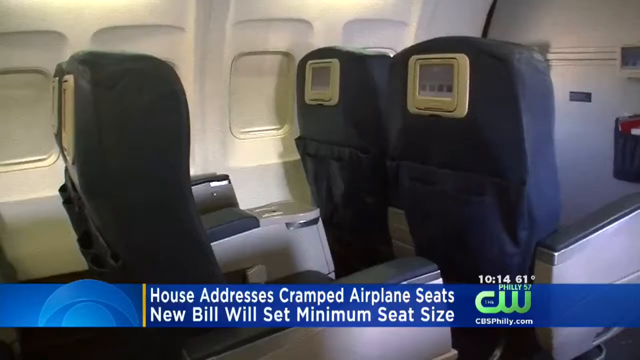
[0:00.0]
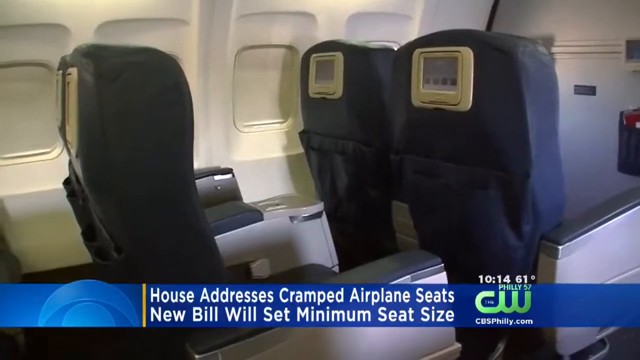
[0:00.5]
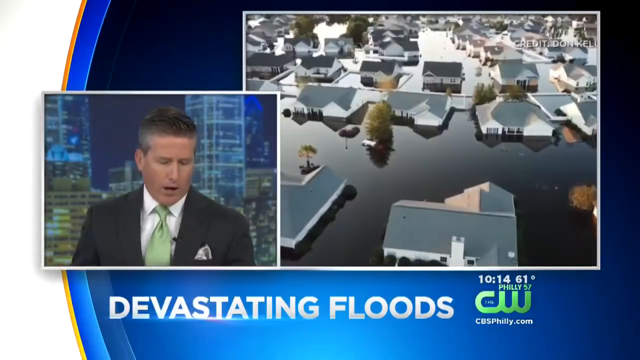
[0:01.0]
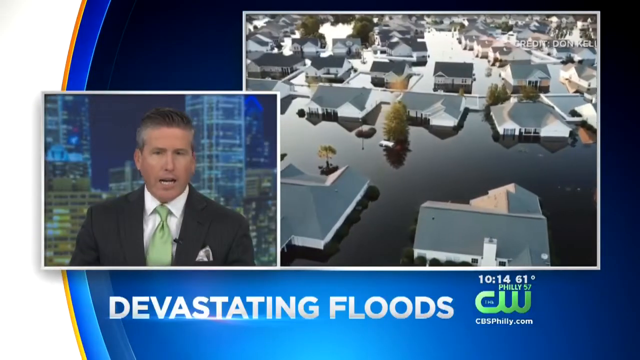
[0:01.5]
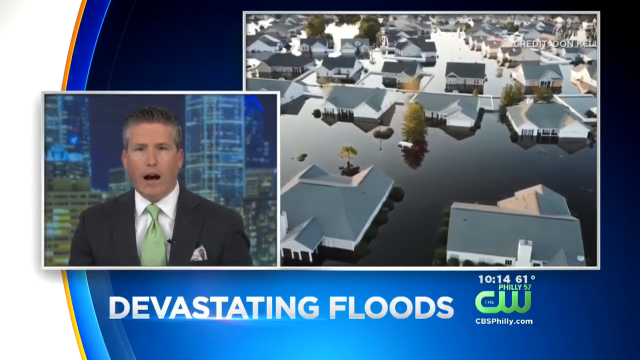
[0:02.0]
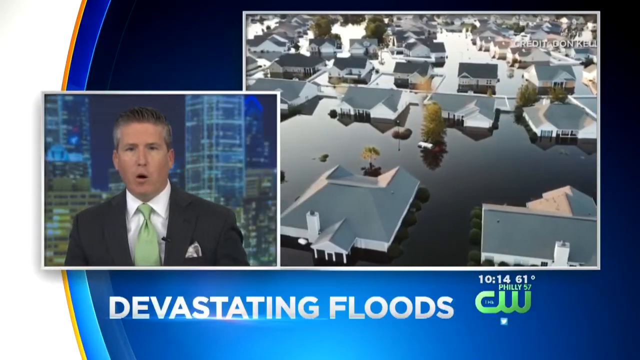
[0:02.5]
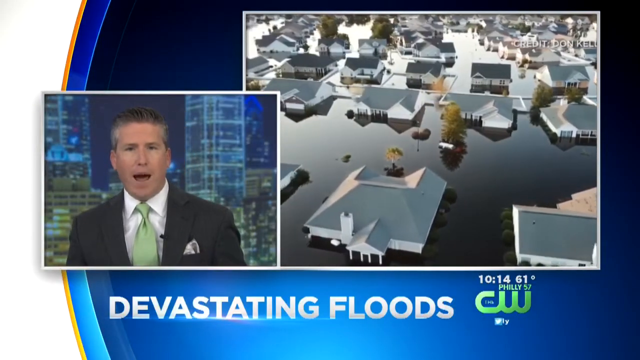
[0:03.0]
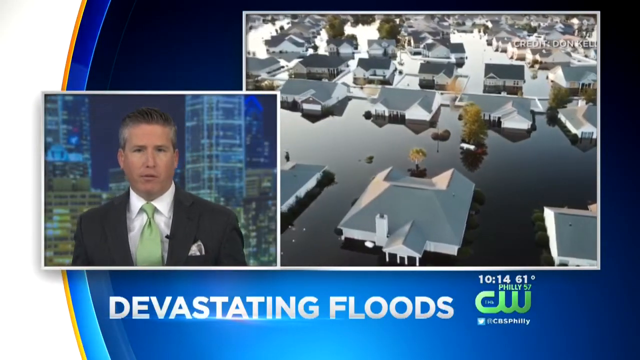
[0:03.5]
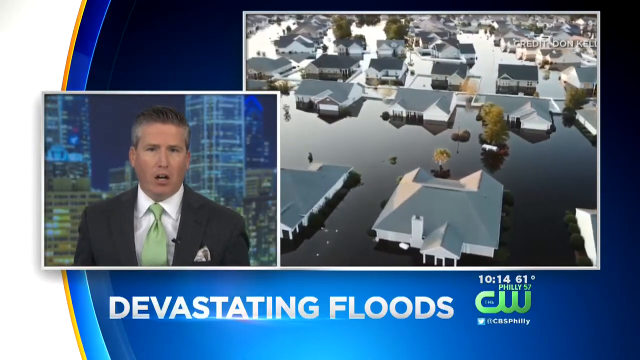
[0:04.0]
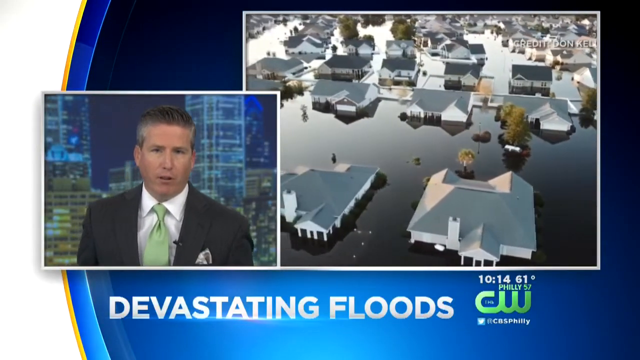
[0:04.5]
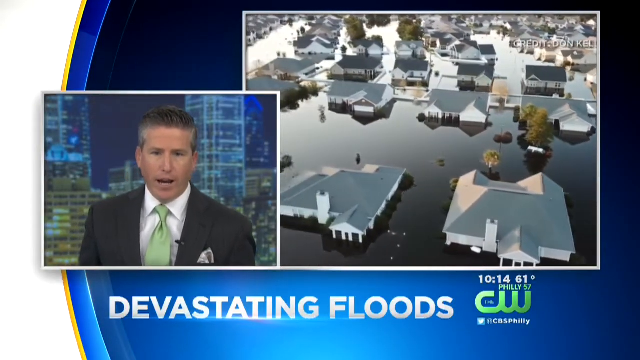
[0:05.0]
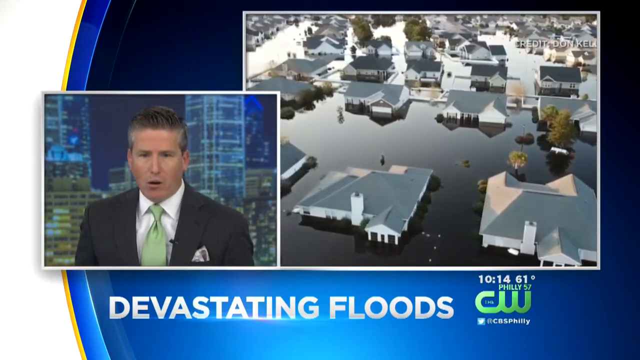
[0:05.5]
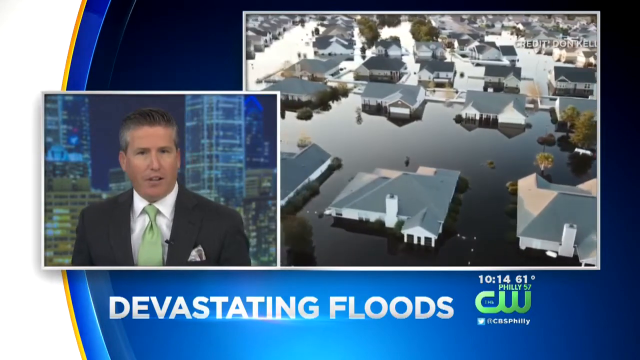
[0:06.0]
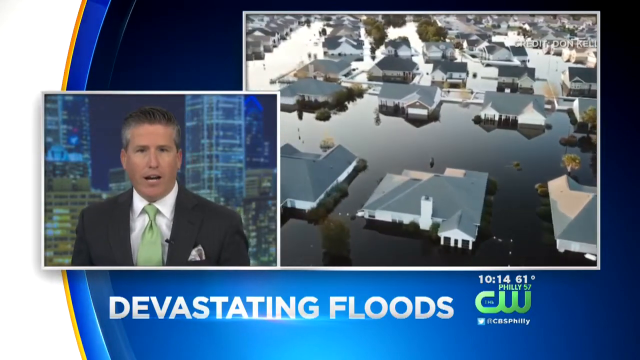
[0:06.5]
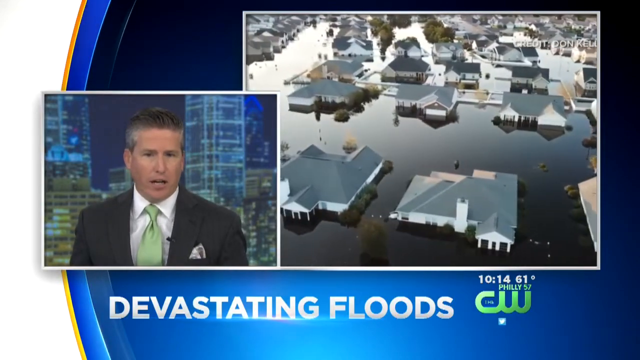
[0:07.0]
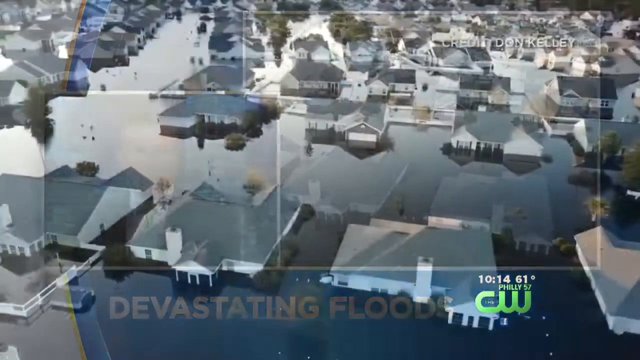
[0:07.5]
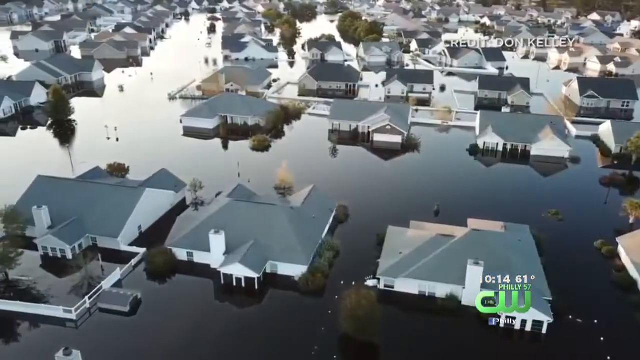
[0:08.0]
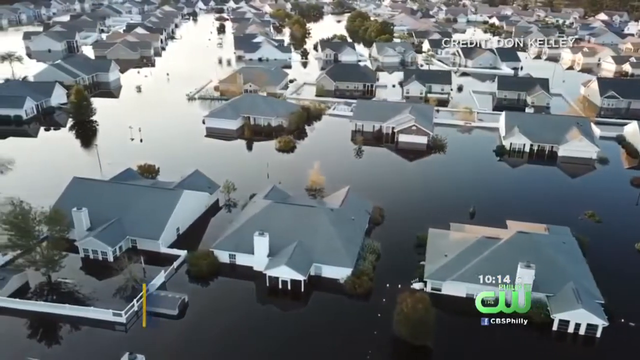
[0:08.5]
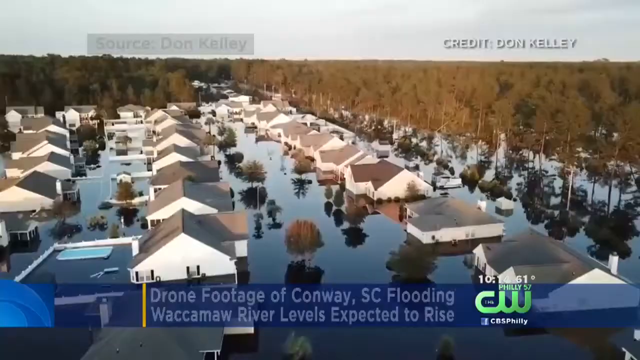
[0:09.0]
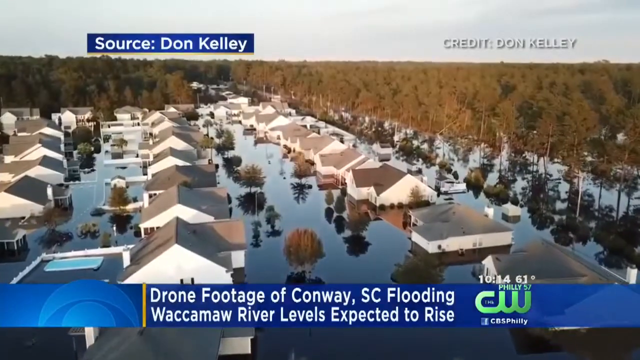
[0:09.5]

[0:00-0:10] Houses stand in floodwater, with text on screen reading "the devastating of floods." Water is everywhere, and from afar the houses are seen sitting in the water. Some trees are visible, along with some areas of what may be snow. The houses look gray and are just sitting there in the water, and the water level is high around them.